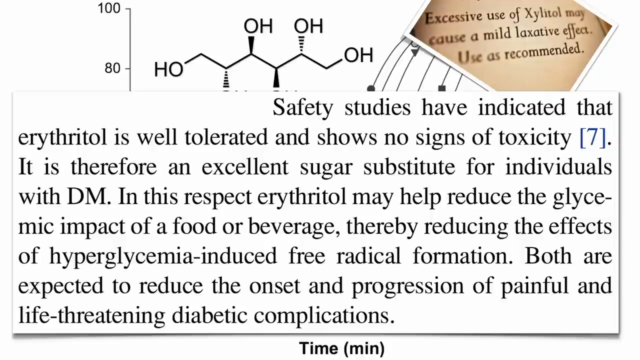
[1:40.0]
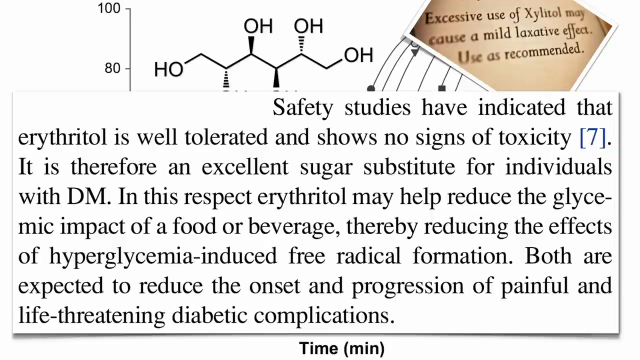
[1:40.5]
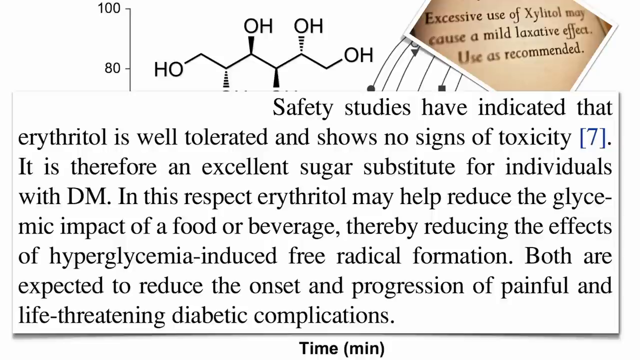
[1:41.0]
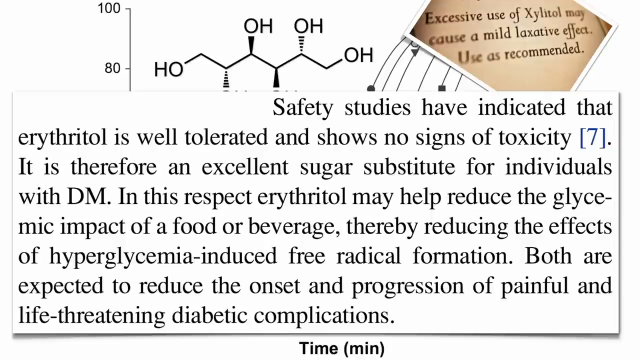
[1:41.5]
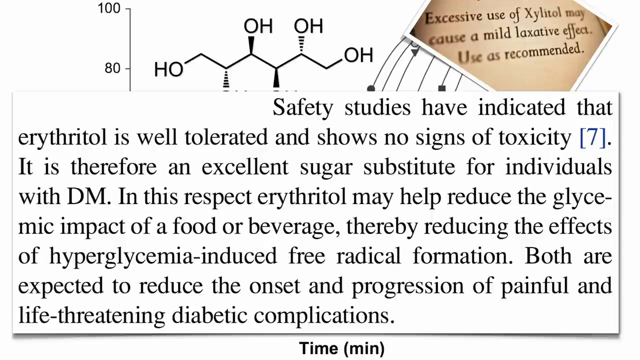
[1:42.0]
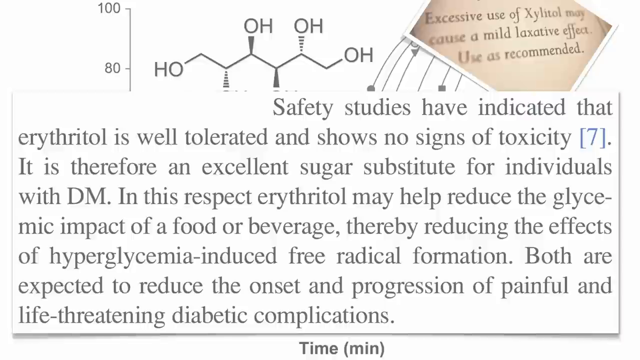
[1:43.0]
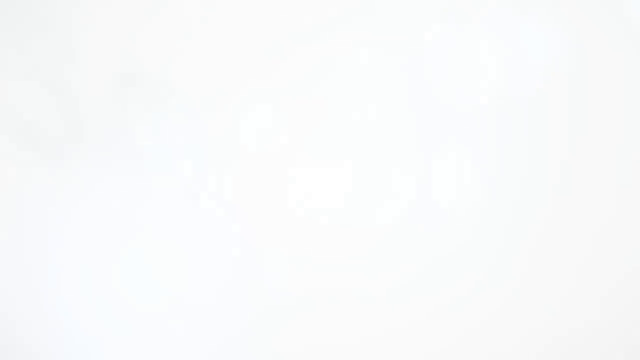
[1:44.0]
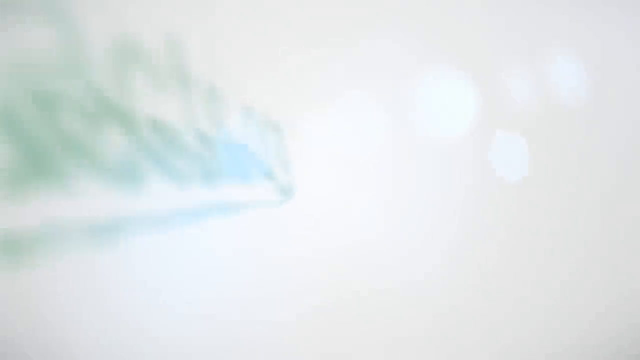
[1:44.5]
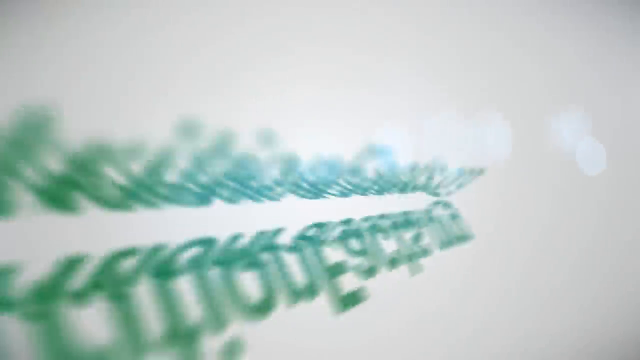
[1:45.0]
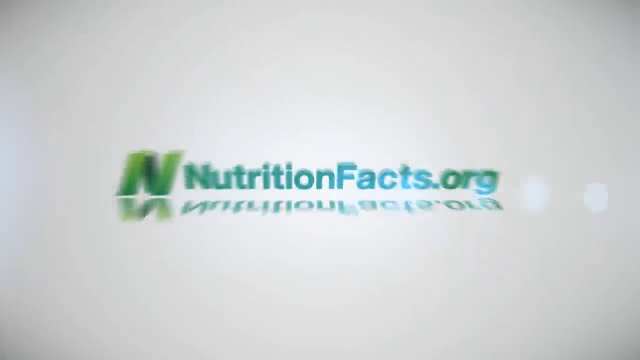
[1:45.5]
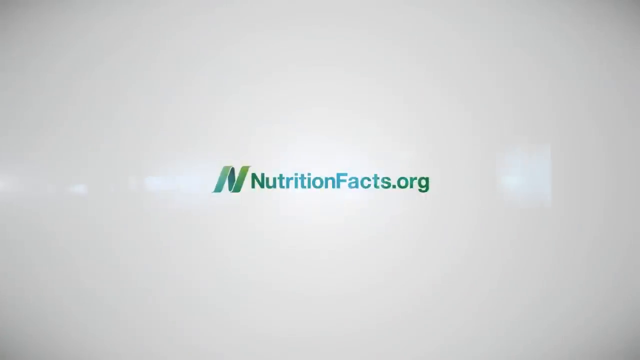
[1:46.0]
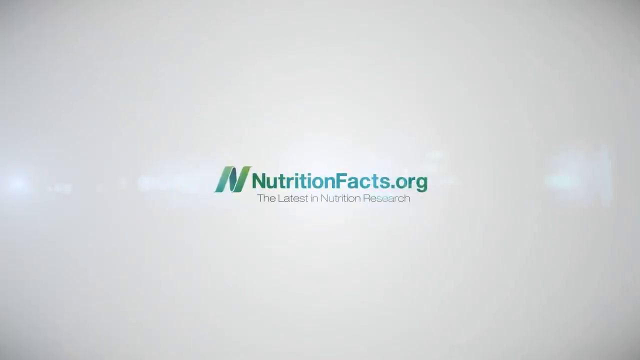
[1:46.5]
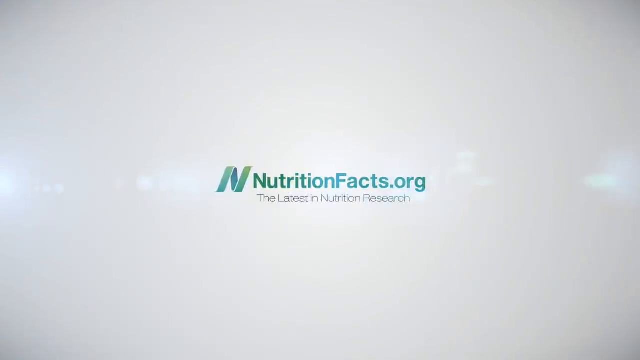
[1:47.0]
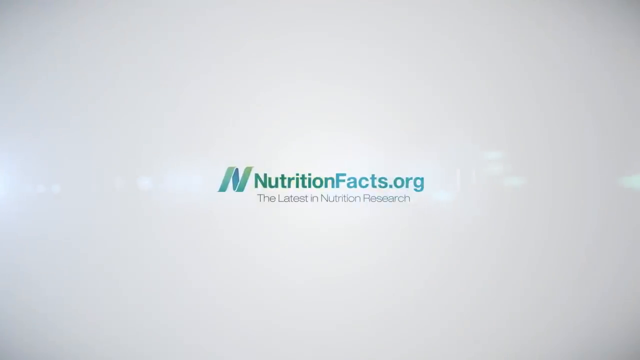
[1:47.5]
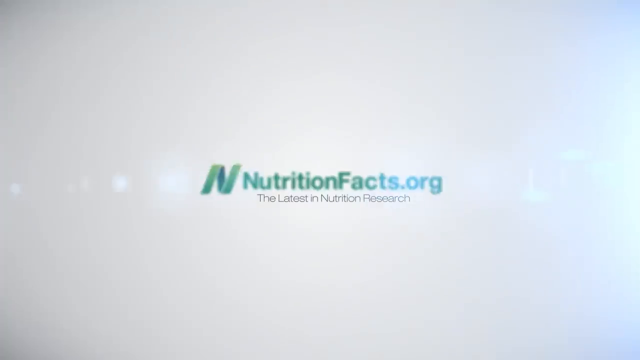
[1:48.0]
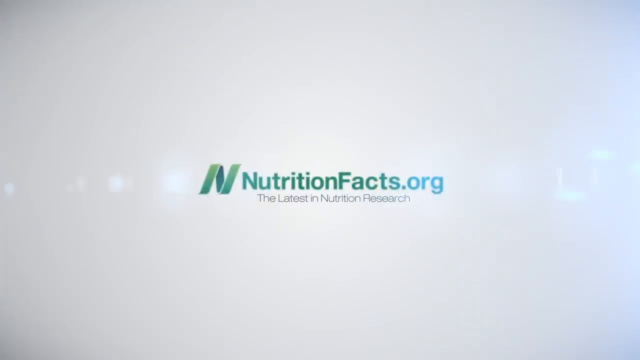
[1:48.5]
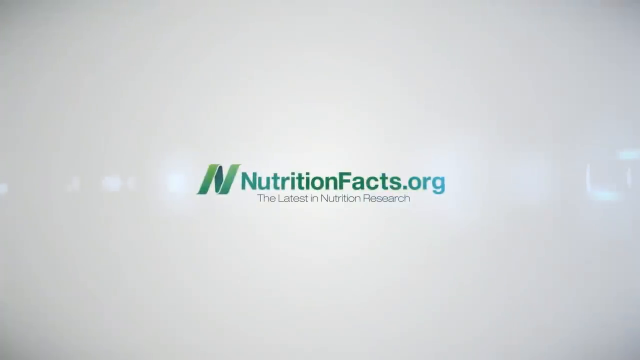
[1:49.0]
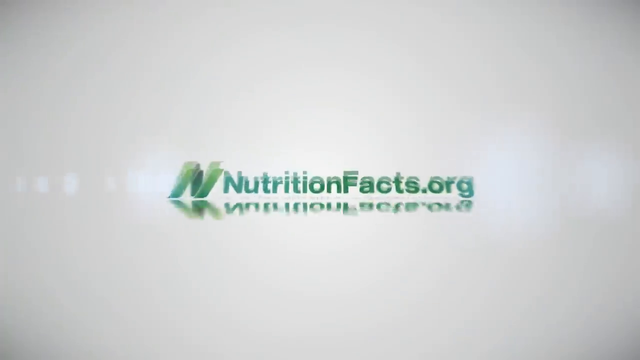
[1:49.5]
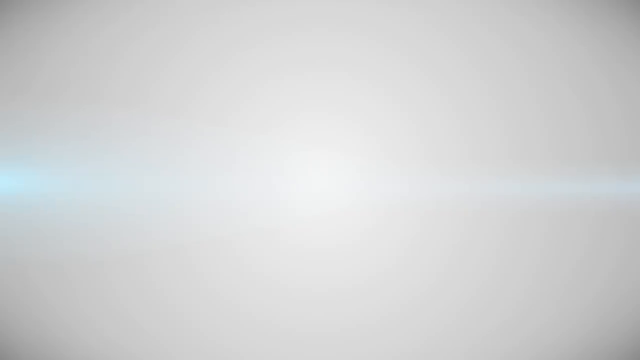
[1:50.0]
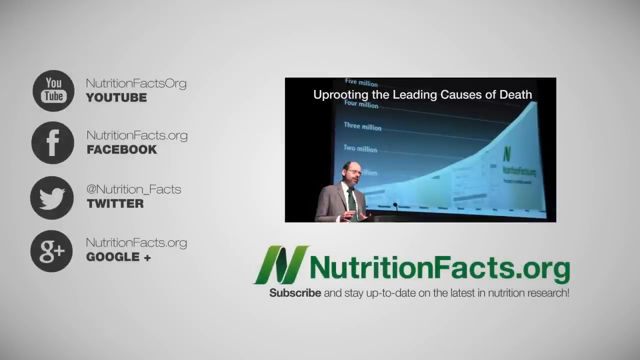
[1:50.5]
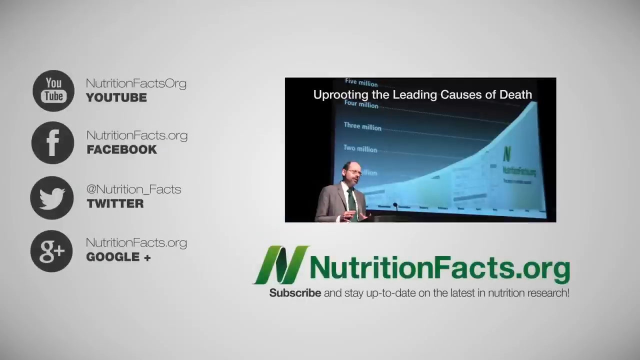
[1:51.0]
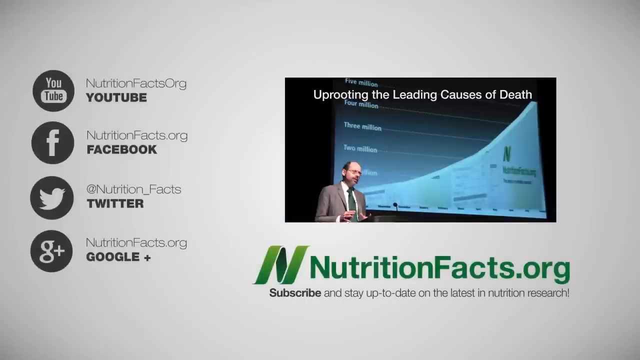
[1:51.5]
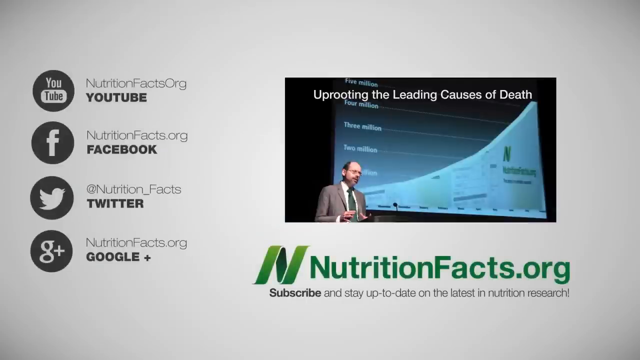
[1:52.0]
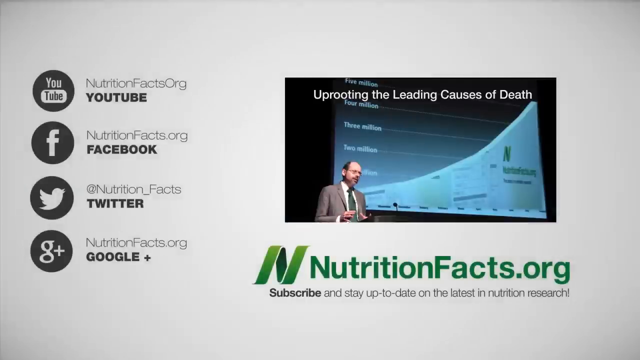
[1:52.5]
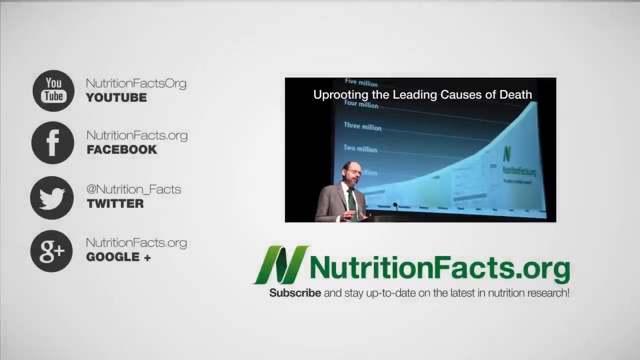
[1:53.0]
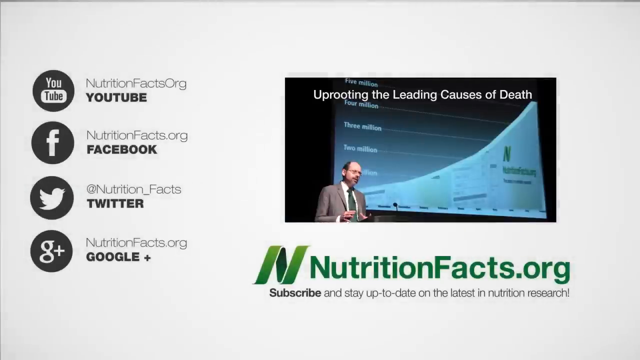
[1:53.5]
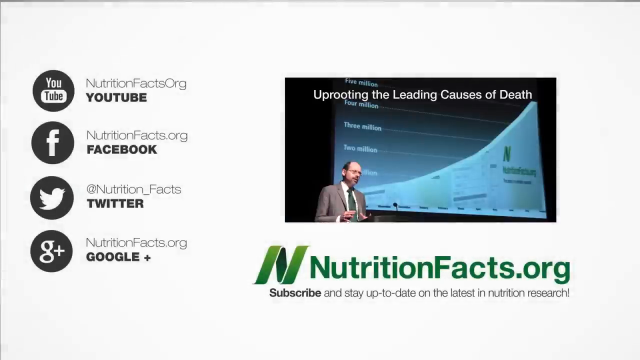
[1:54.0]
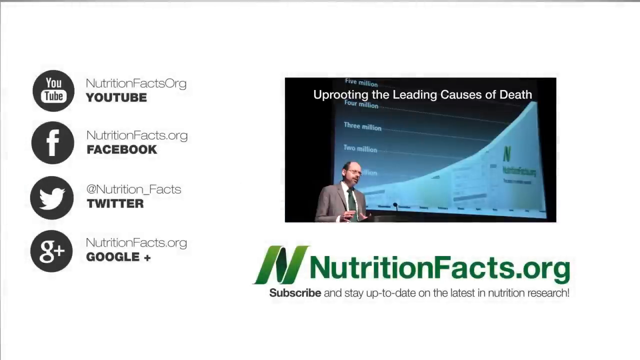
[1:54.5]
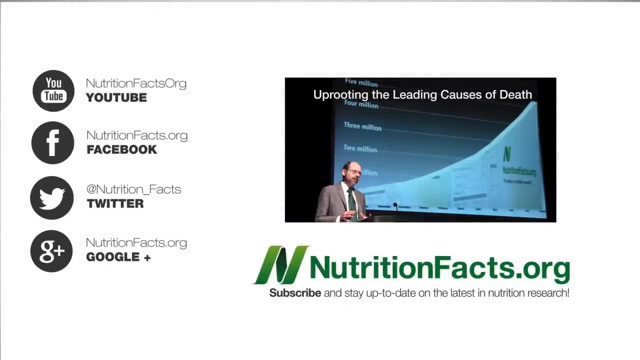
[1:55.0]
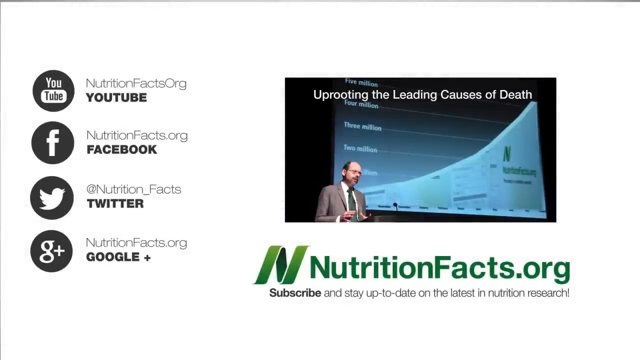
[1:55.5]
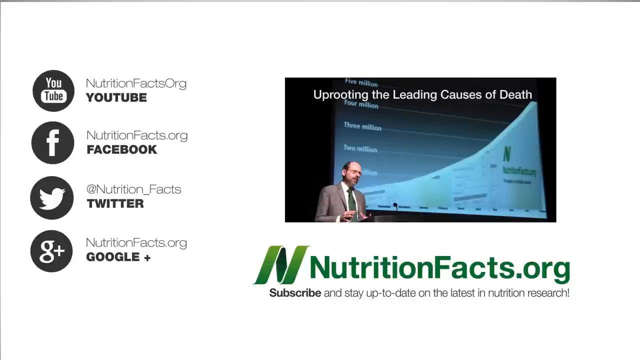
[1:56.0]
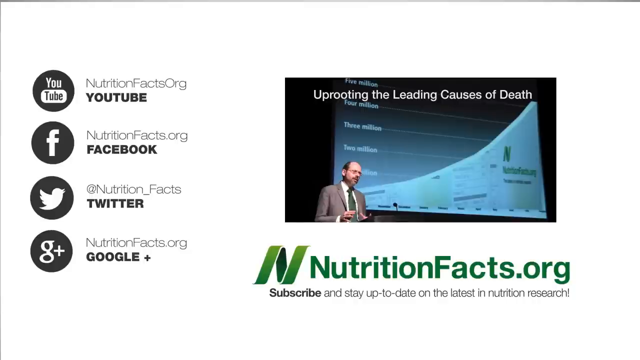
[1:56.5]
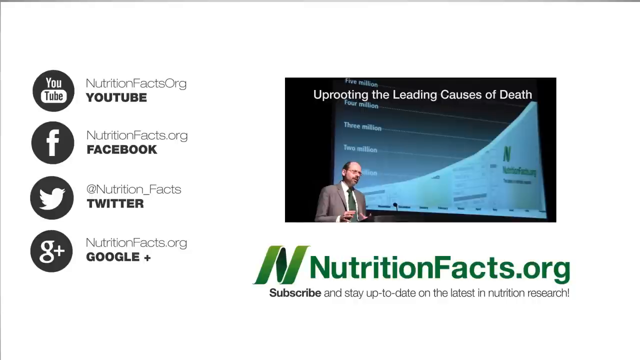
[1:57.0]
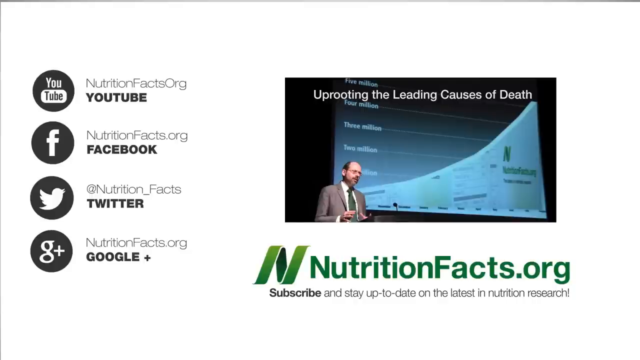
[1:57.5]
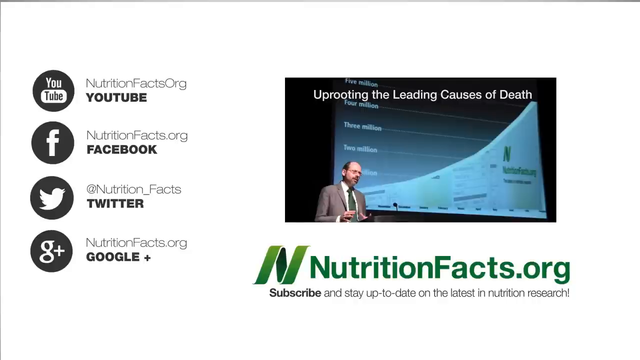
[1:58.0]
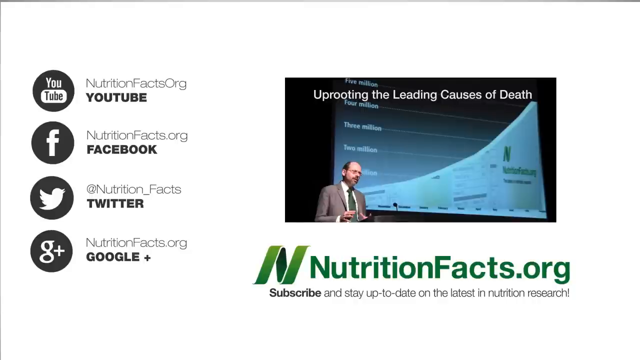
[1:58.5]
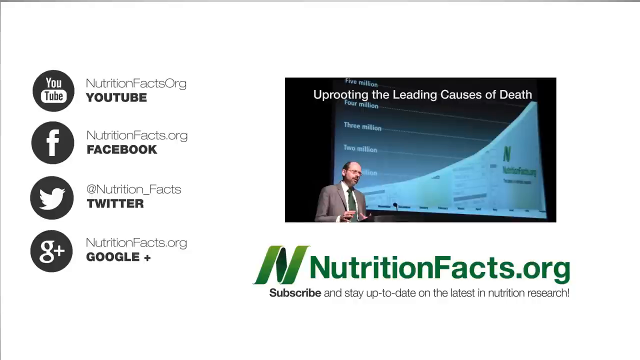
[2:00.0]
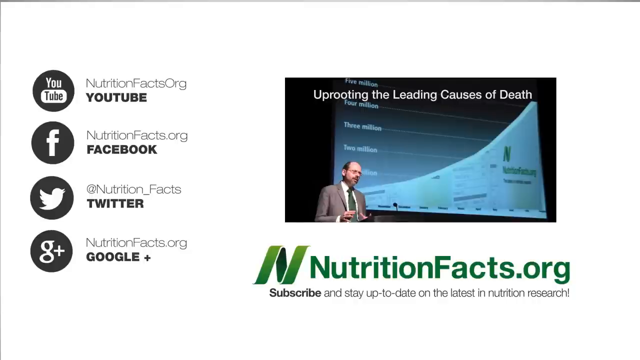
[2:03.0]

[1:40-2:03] Text at the bottom middle of the screen, black on a white background, reads: "safety studies have indicated that erythritol is well-tolerated and shows no signs of toxicity. It is therefore an excellent sugar substitute for individuals with DEM. In this respect, erythritol may help reduce the glycemic impact of a food or beverage, thereby reducing the effects of hyperglycemia-induced free radical formation. Both are expected to reduce the onset and progression of painful and life-threatening diabetic complications." At the top right of the screen, above this message, it reads "excessive use of Xylitol may cause a mild laxative effect. Use as recommended." The video then switches to "nutritionfacts.org" and "the latest in nutrition research" in green letters on a white background. Finally, it switches to a scene with a gentleman in a grey suit with a white dress shirt underneath, wearing glasses and a forest green tie.